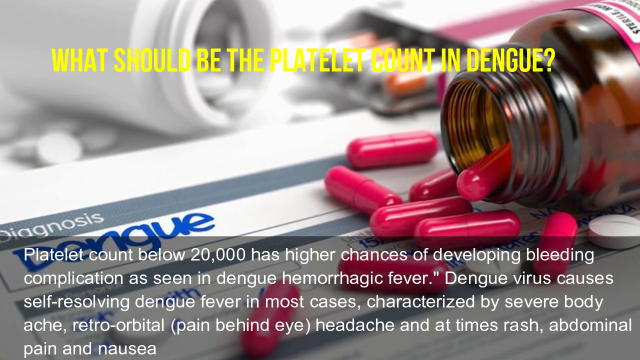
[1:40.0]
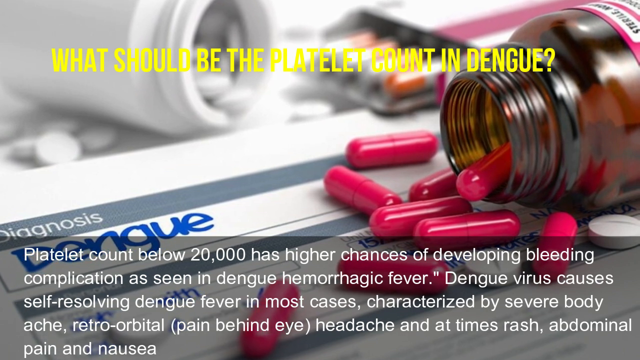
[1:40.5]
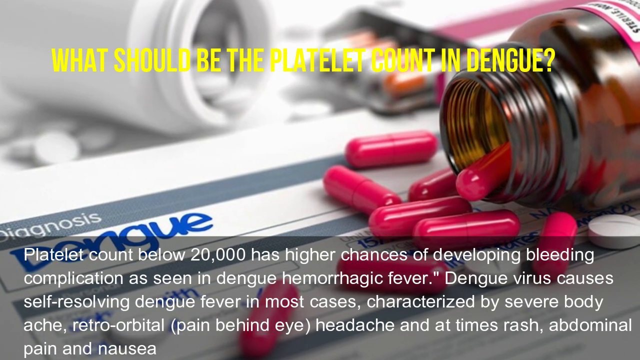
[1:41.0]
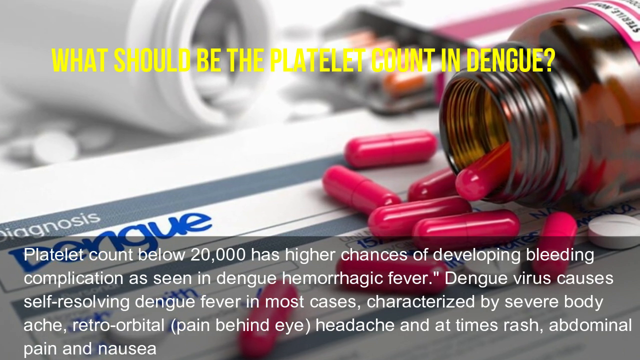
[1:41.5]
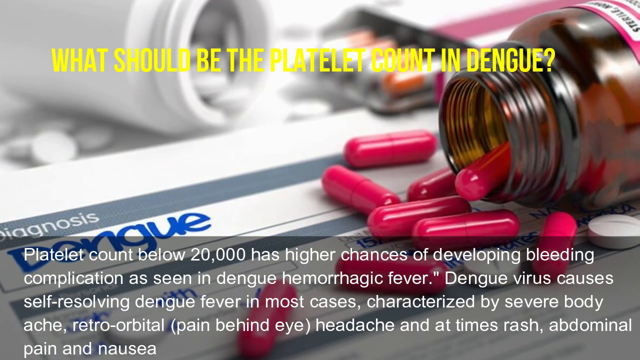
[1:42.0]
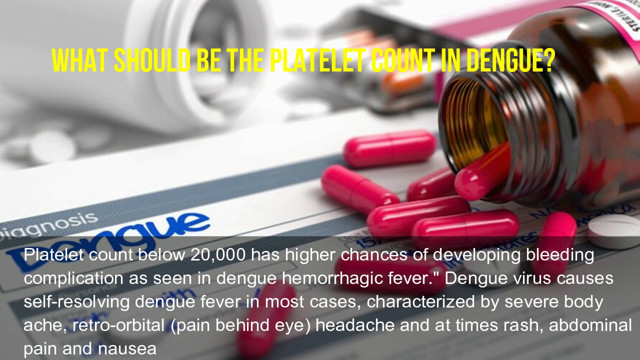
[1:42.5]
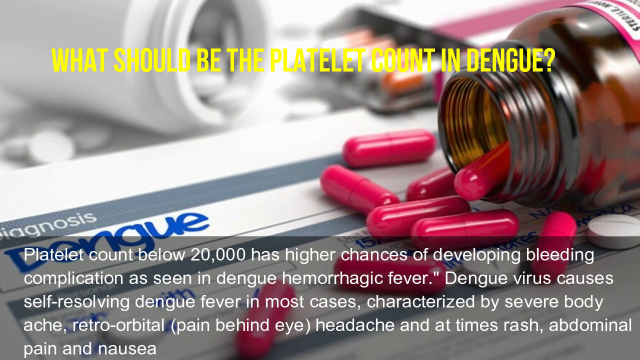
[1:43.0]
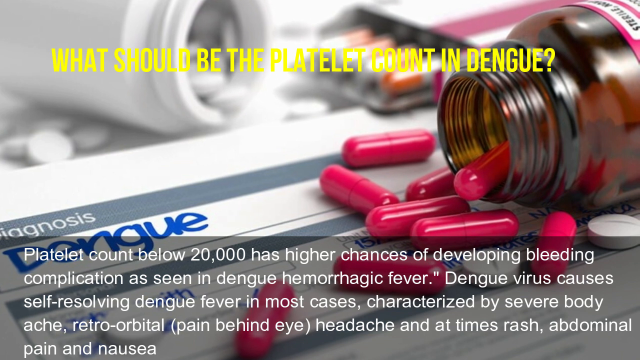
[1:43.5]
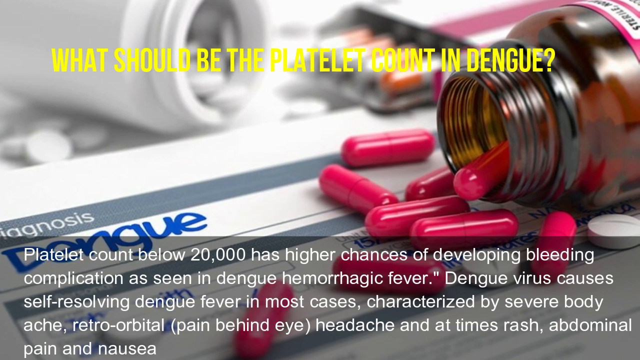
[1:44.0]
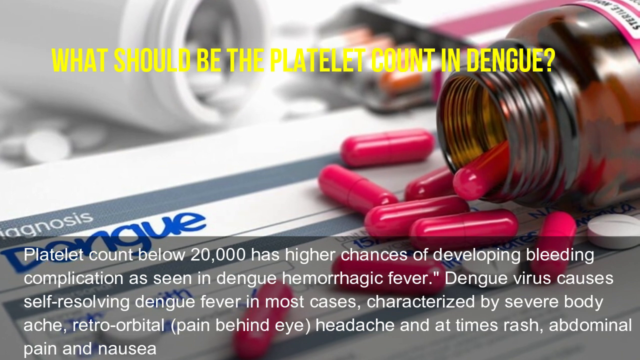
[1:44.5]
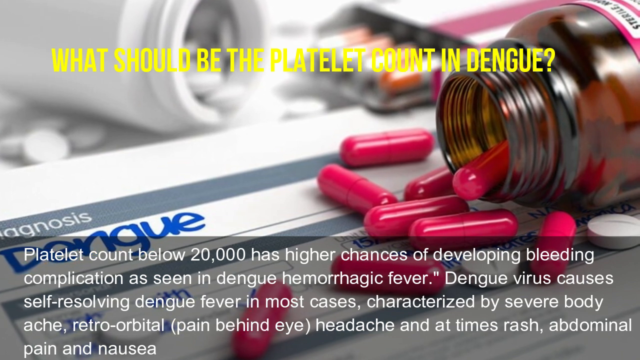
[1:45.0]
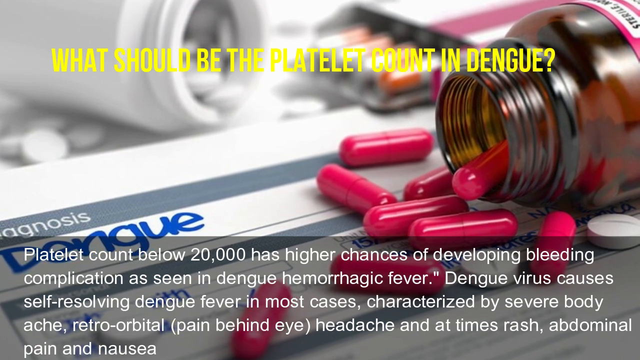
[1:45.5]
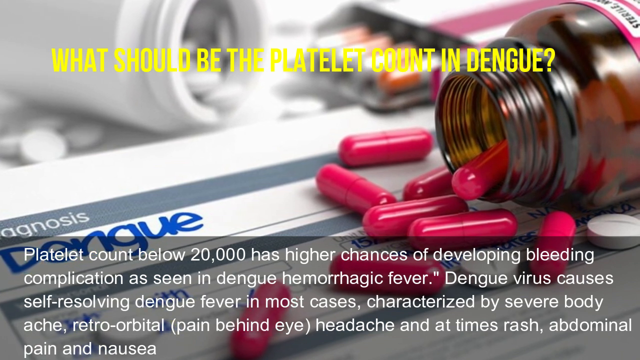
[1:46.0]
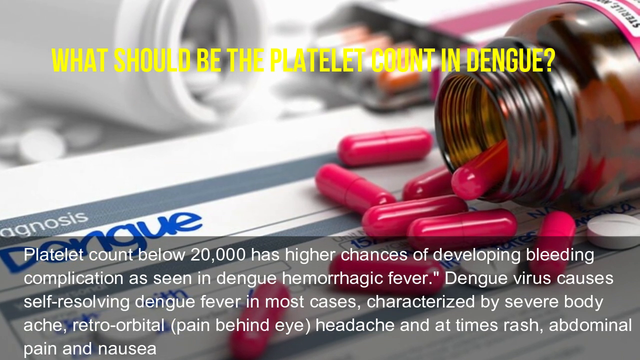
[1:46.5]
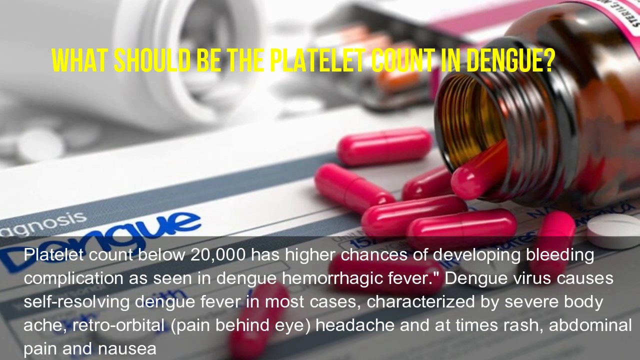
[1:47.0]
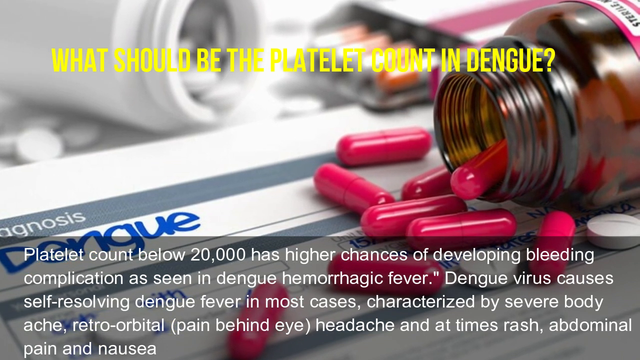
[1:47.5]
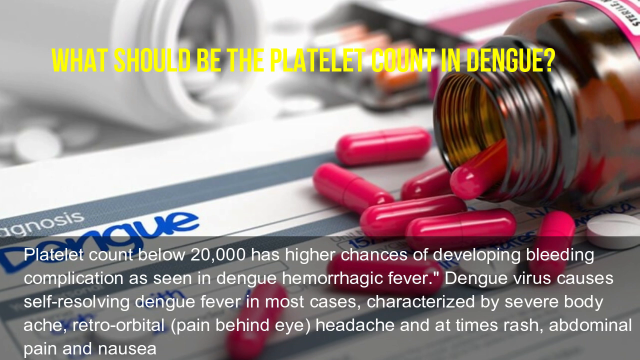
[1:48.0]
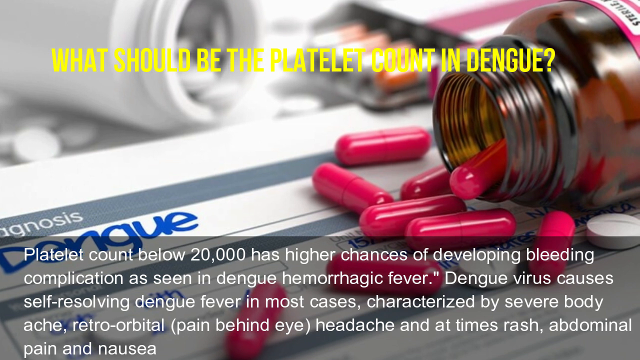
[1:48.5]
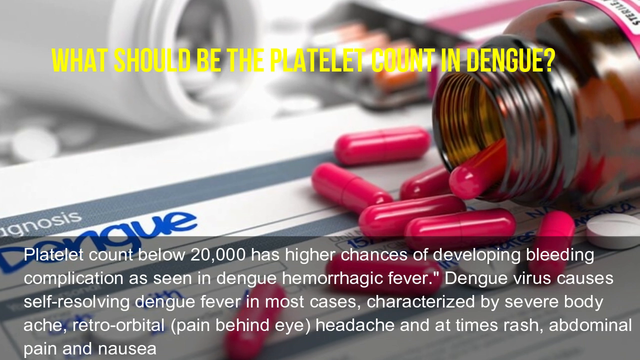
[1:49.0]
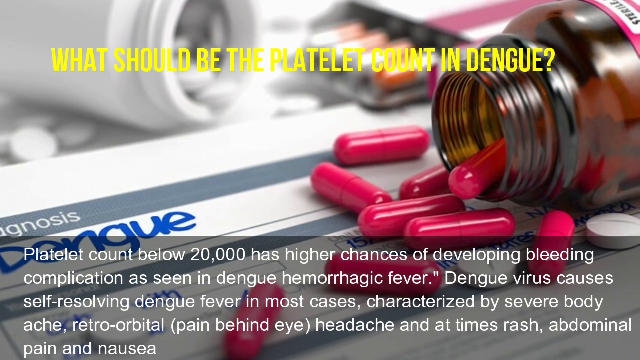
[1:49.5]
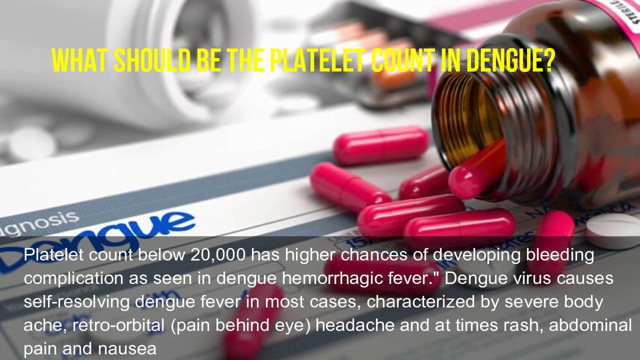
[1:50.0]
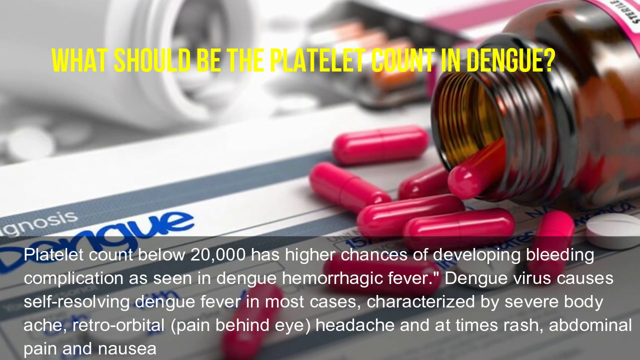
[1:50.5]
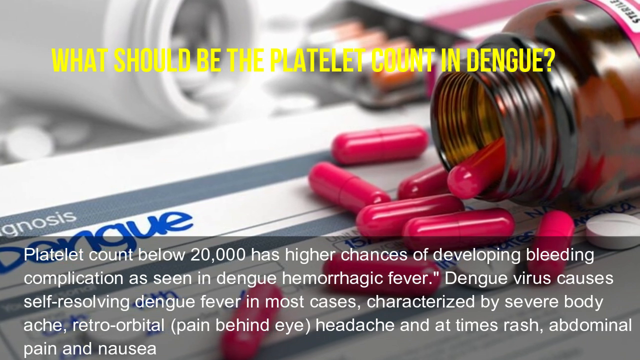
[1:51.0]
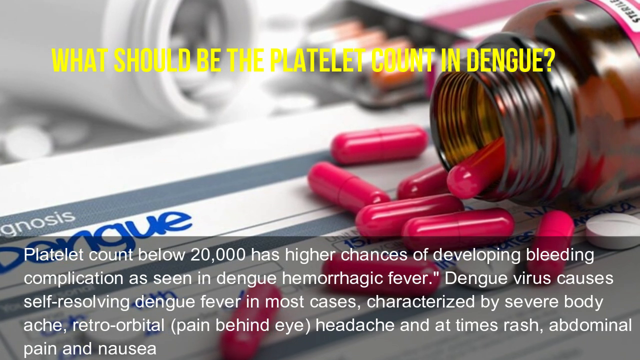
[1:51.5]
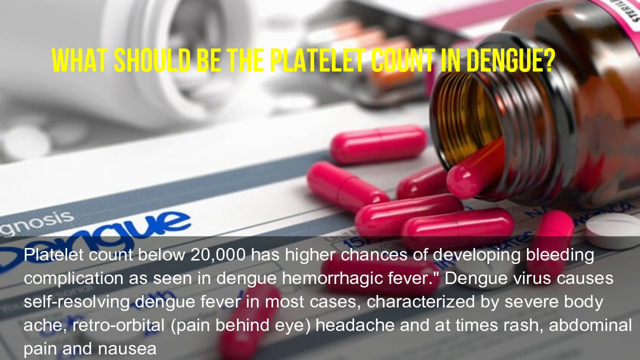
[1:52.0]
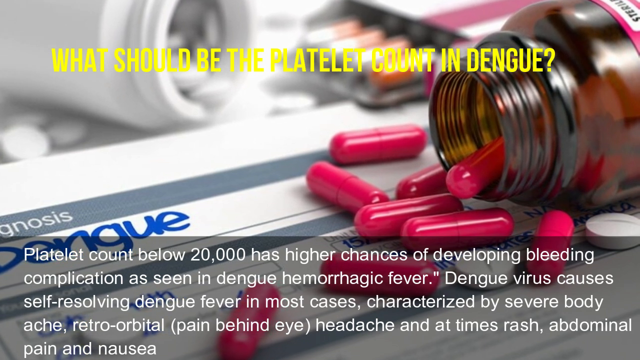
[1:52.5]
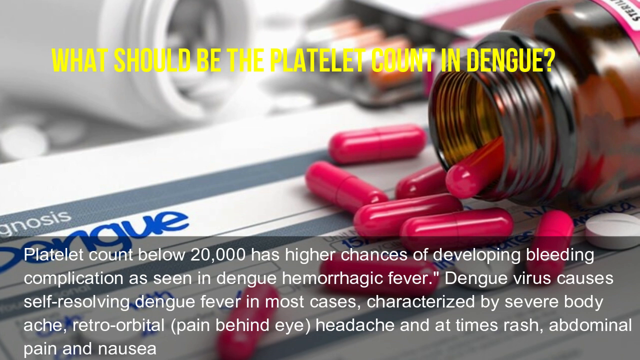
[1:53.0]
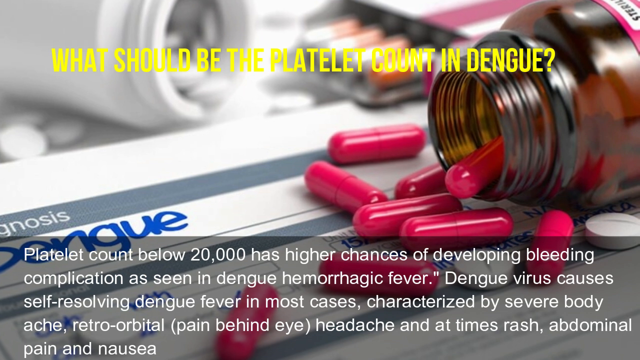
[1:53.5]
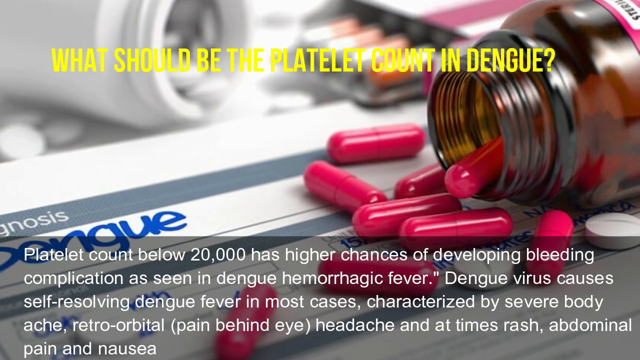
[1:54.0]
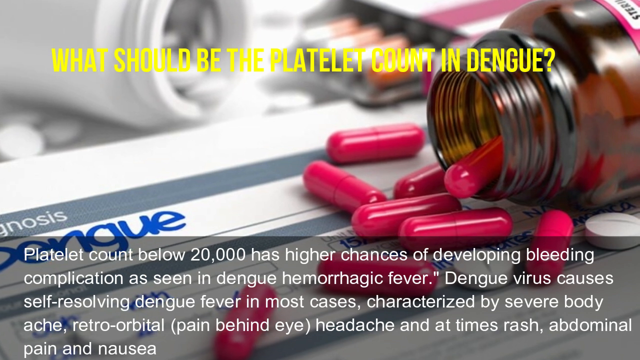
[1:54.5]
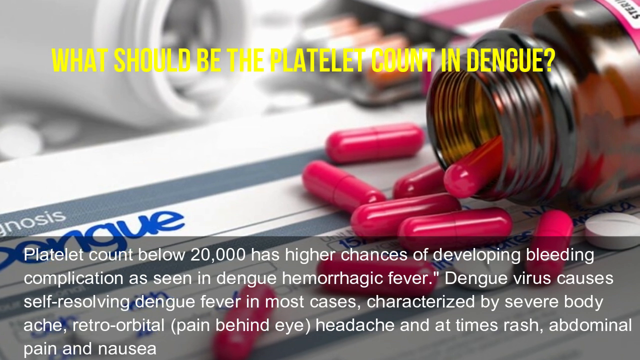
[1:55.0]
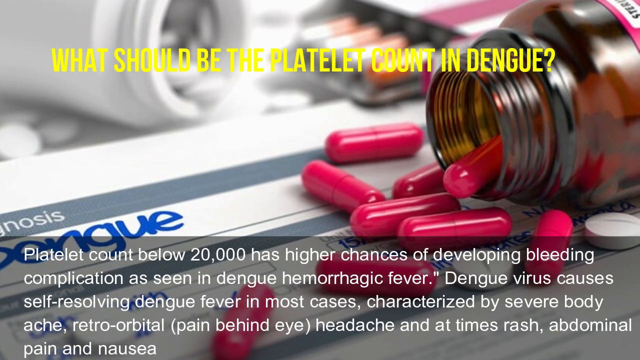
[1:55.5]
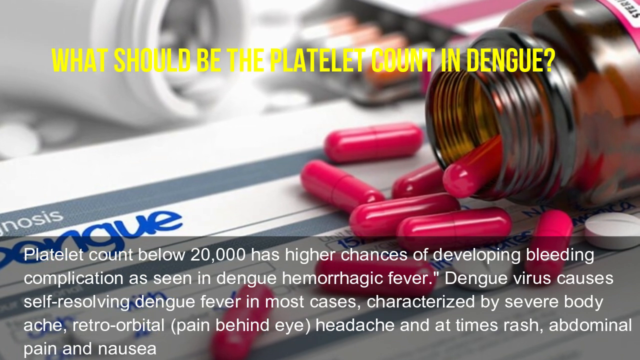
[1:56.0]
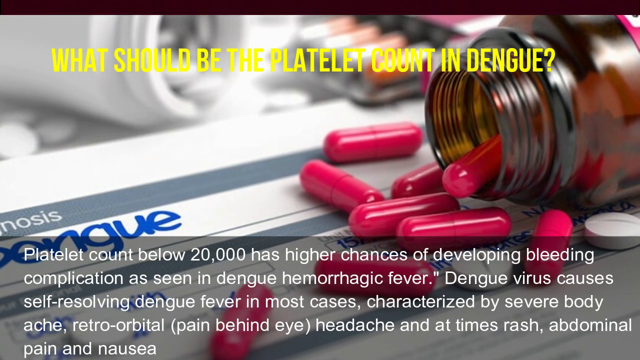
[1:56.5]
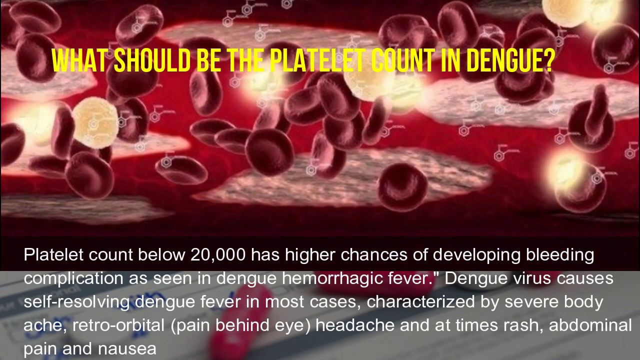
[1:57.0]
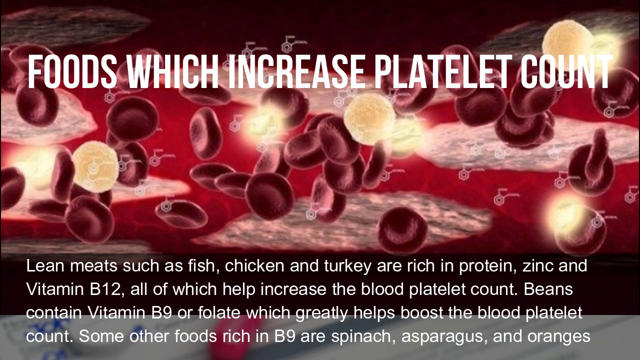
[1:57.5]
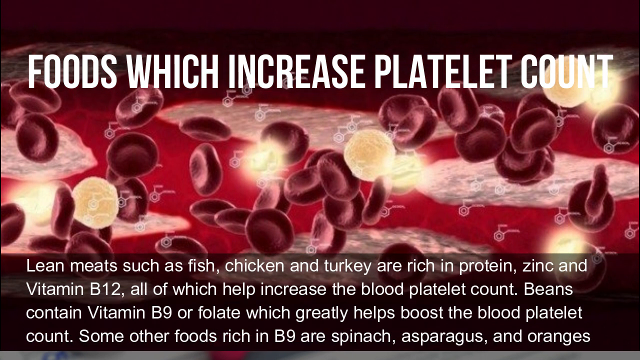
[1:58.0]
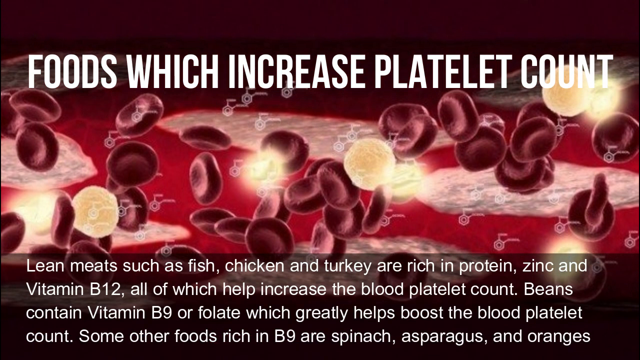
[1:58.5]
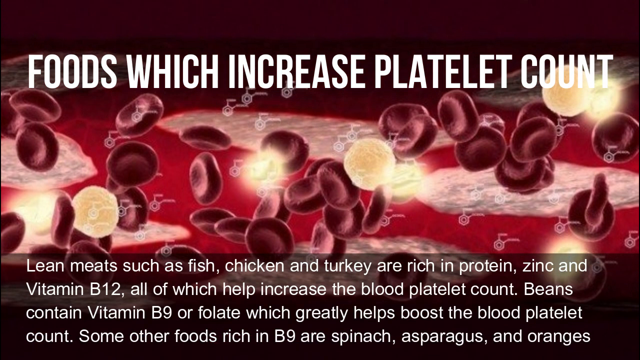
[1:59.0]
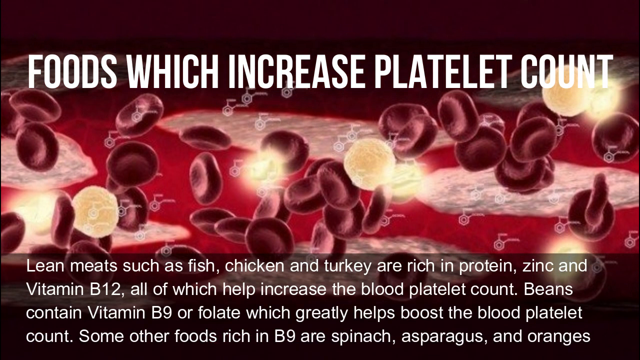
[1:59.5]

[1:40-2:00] Text reads: "platelet count below 20,000 has higher chances of developing bleeding complication as seen in dengue hemorrhagic fever. Dengue viruses causes self-resolving dengue fever in most cases characterized by a severe body ache, retro-orbital pain behind eye, headache, and at times rash, abdominal pain, and nausea." The title of this part says "what should be the platelet count in dengue?" in yellow letters. The background is a pill bottle with pink pills coming out of it, and a piece of paper with the word "diagnosis" and the word "dengue" handwritten beneath it. The pill bottle is dark brown glass with a pink and white label. Another section says "foods which increase platelet count" with the text "Lean meats such as fish, chicken, and turkey are rich in protein, zinc, and vitamin B12, all of which help increase the blood platelet count."